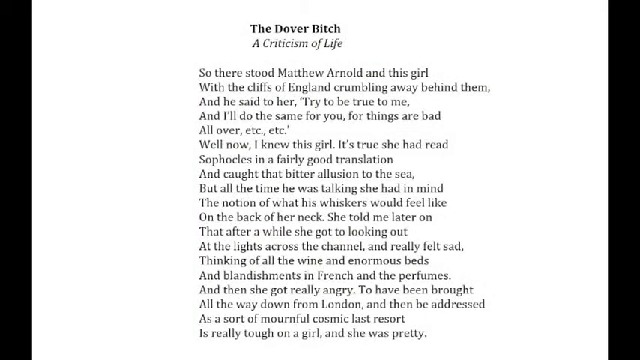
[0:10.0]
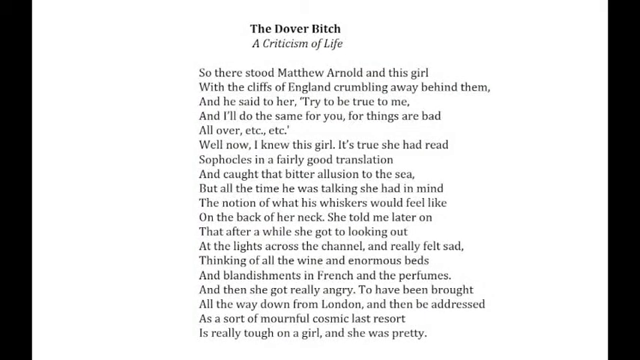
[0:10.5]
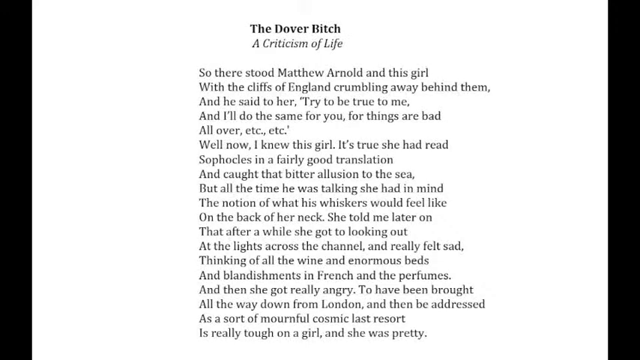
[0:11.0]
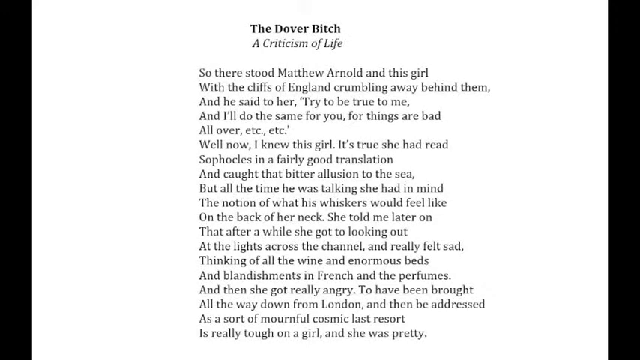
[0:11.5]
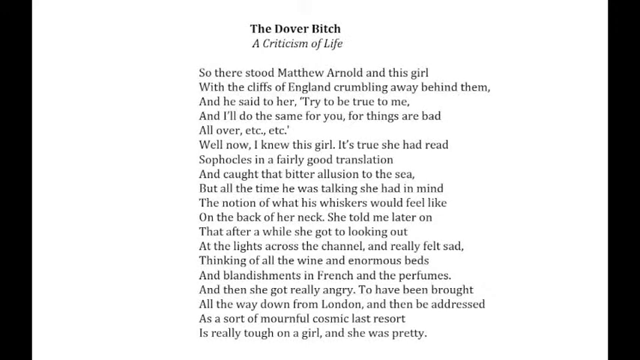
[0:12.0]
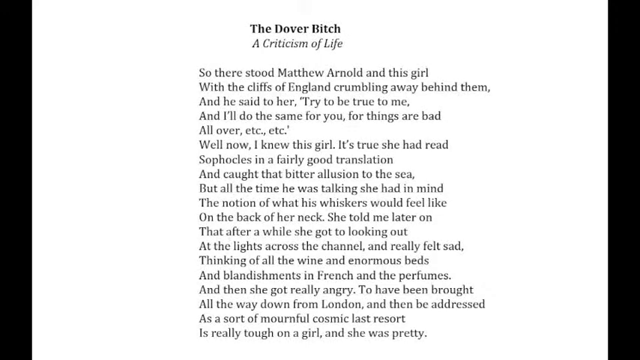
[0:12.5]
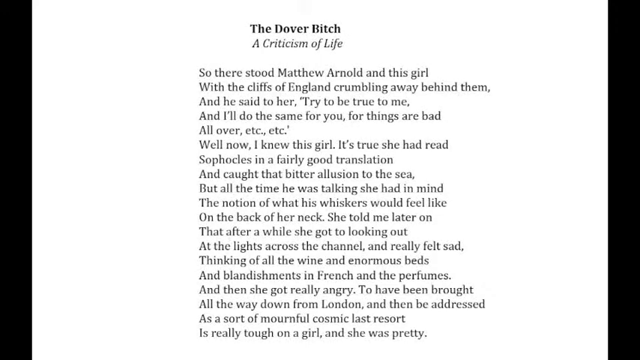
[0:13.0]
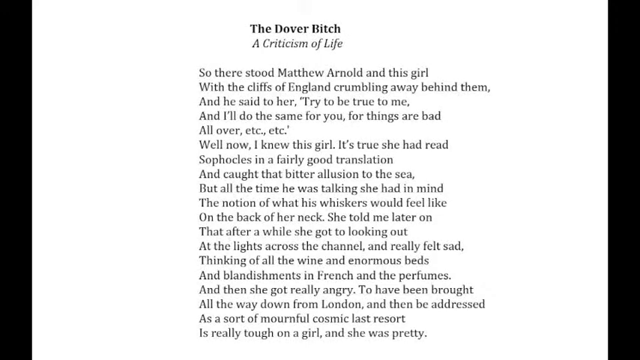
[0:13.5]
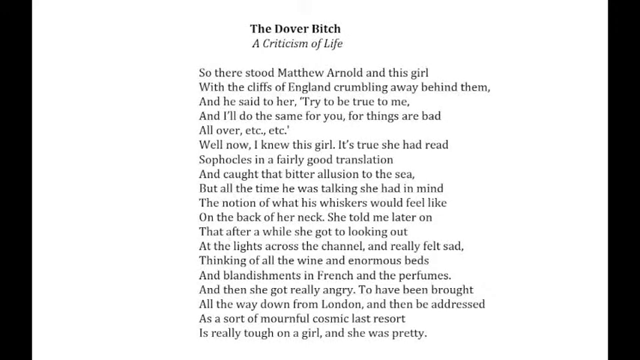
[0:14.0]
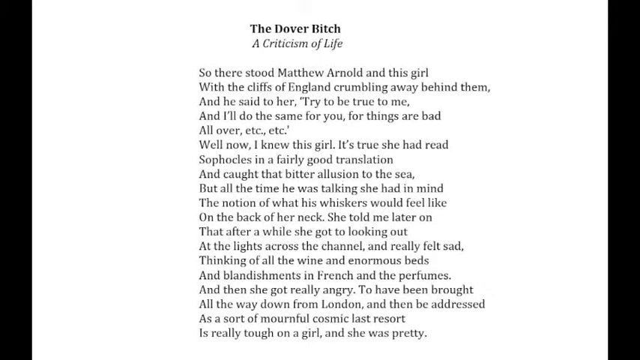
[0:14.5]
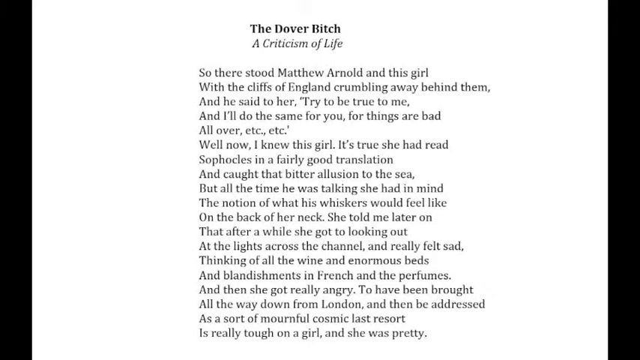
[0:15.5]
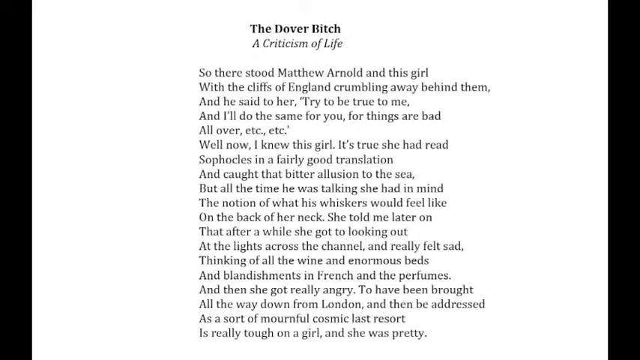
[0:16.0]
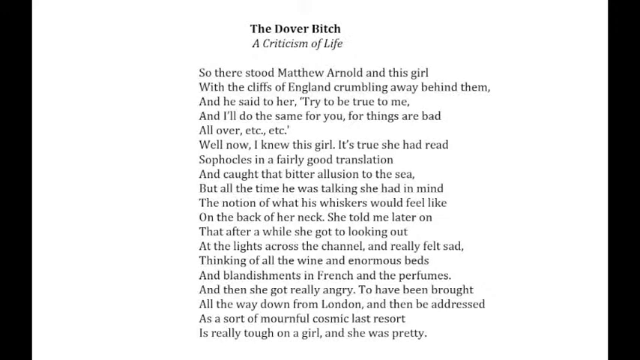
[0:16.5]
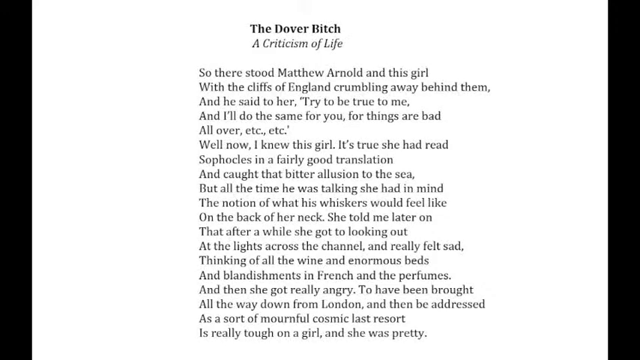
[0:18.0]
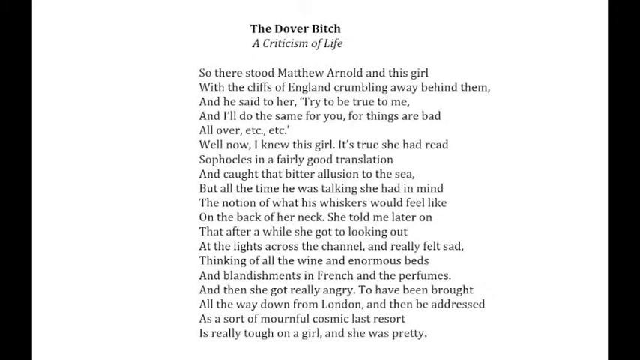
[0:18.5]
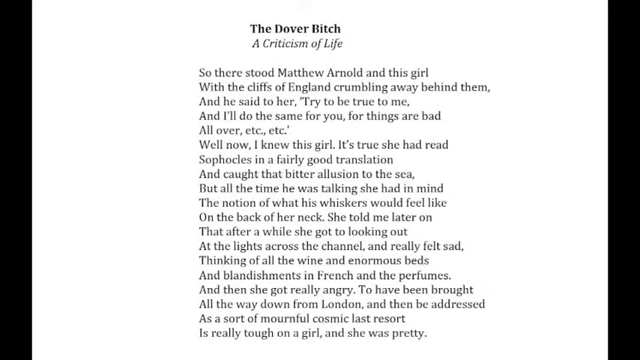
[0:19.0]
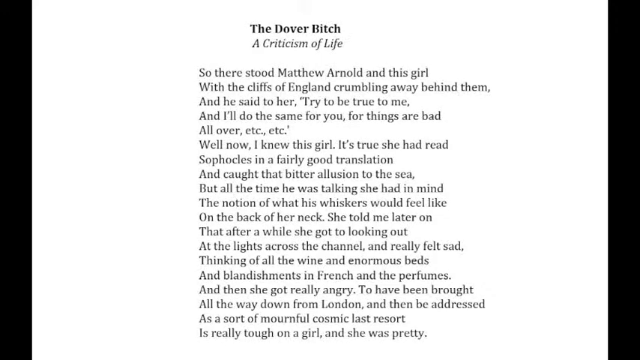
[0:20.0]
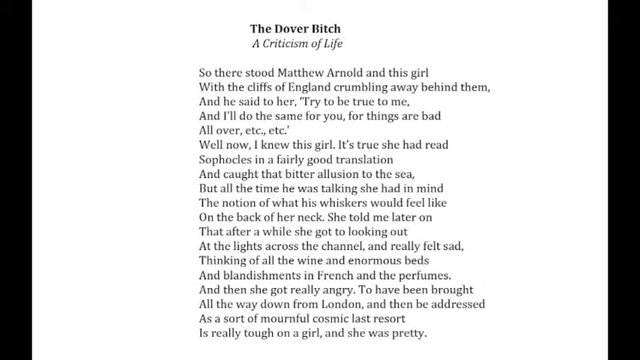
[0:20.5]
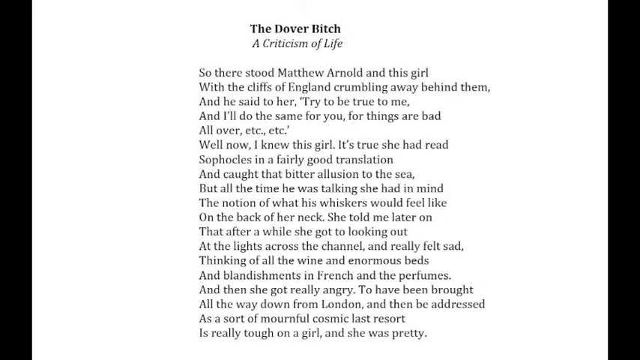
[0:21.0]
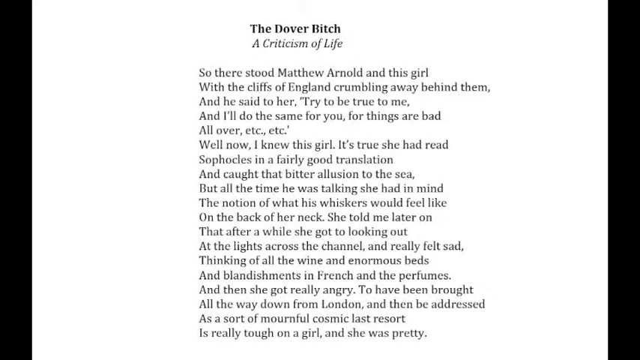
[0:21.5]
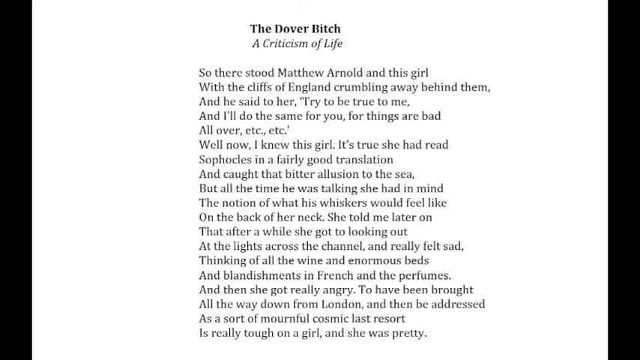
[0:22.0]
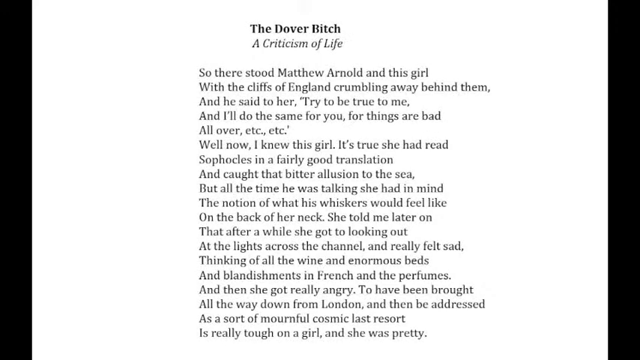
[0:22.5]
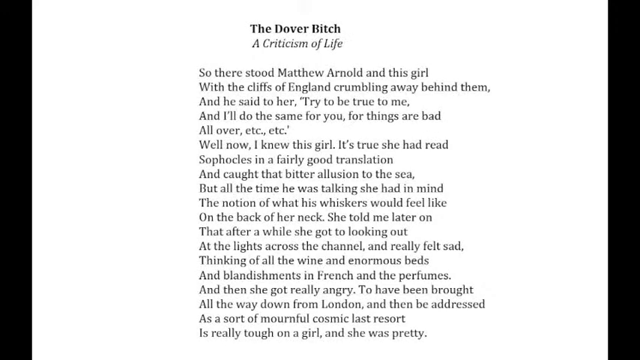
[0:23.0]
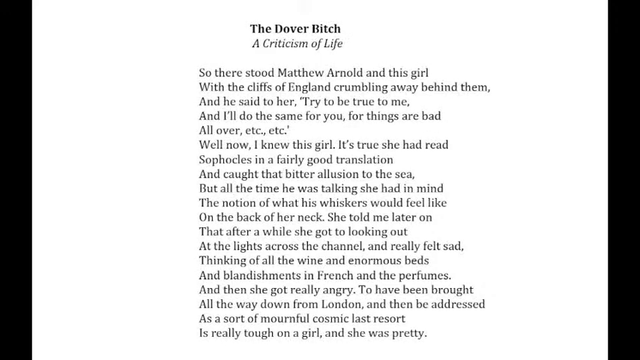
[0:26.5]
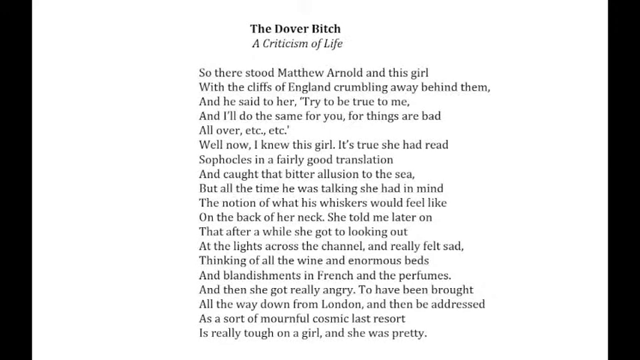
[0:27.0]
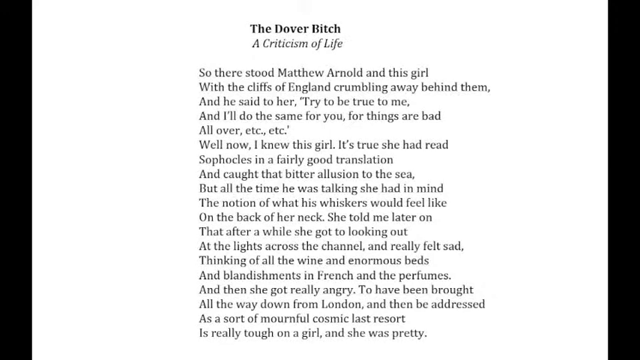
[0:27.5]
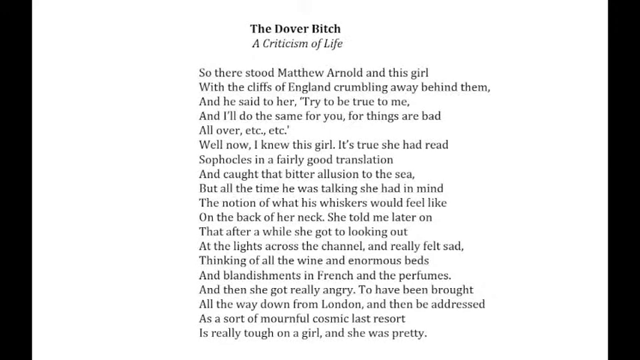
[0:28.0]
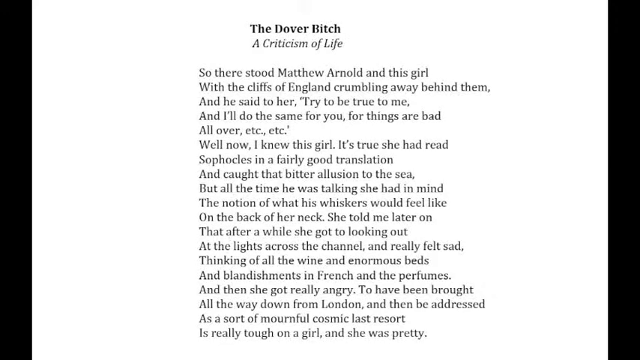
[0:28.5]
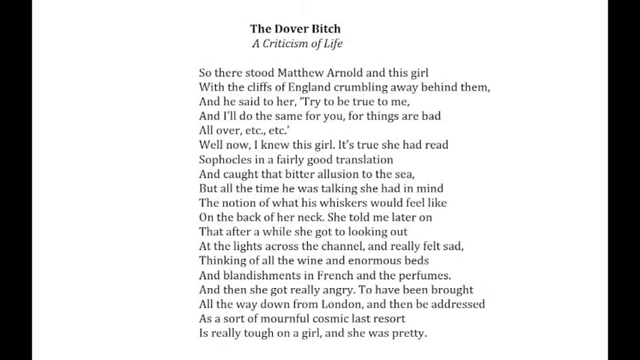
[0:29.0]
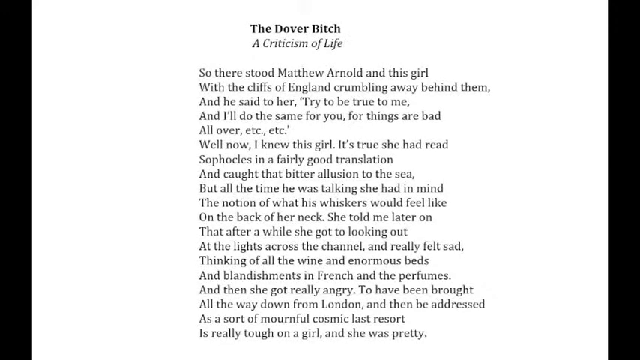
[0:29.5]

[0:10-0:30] The document continues. The fifth line reads "all over etc etc". The following lines include "well now I knew this girl it's true that she had read", "Sophocles in a fairly good translation", "and caught that bitter illusion to the sea", "but all the time he was talking she had in mind", "his whiskers would feel like", "on the back of her neck she told me later on", "that after a while she got to look out", "at the lights across the channel", "thinking of all the wine and enormous beds", "and then she got really angry to have been brought", "all the way down from London", "as a sort of mournful cosmic last resort" and "is really tough on a girl and she was pretty". It is a white, typed document with left alignment, so the left edge is flush. The second line looks like the longest and sticks out, the others are similar in length, and the shortest appears to be the fifth line with the "etc".